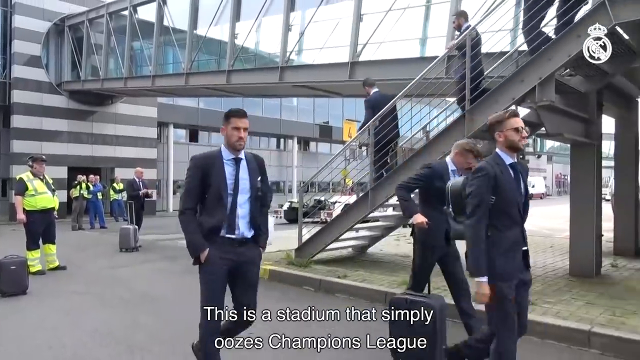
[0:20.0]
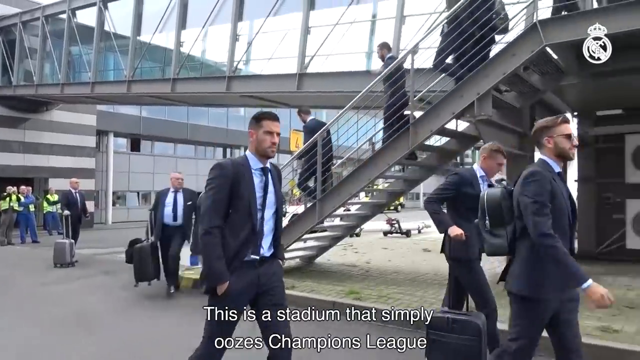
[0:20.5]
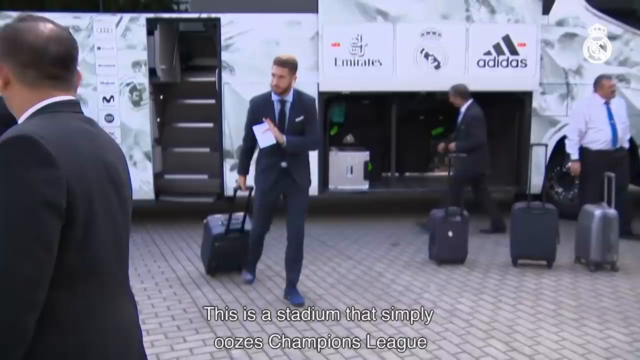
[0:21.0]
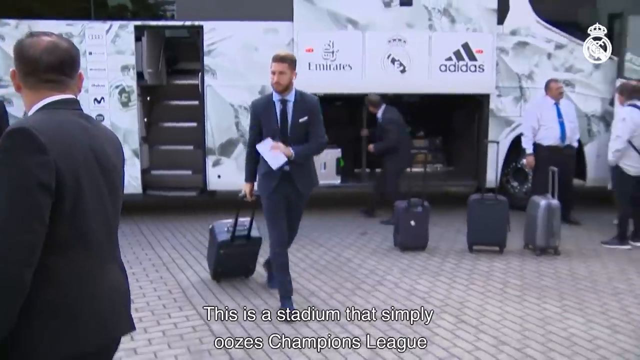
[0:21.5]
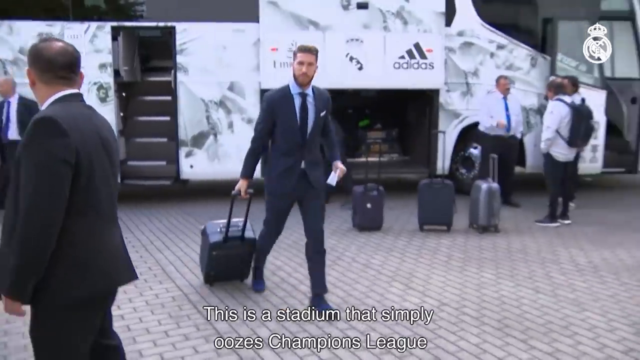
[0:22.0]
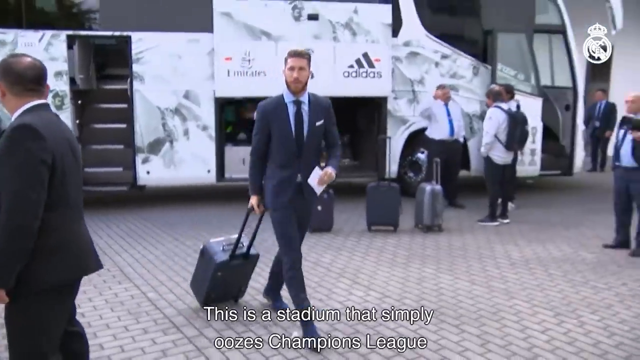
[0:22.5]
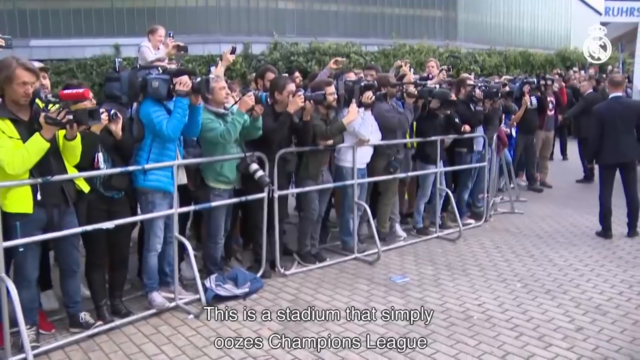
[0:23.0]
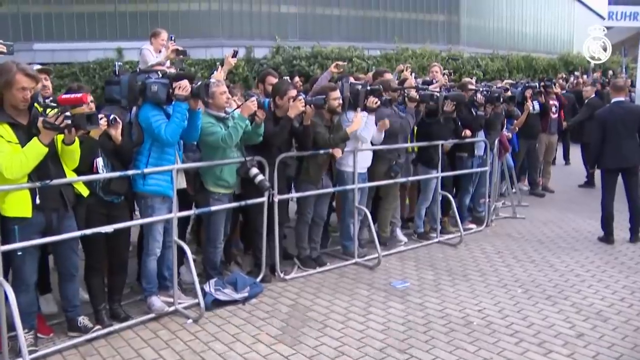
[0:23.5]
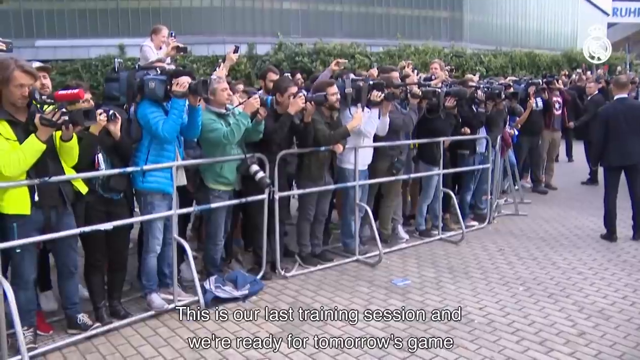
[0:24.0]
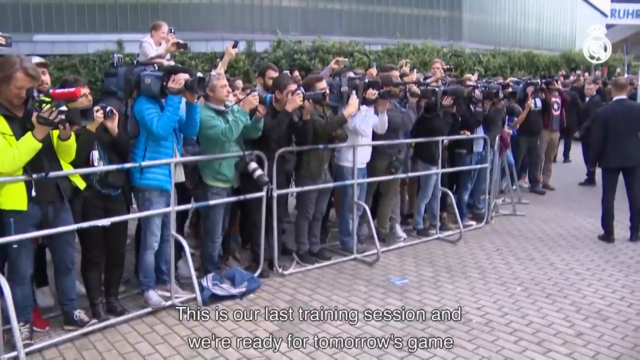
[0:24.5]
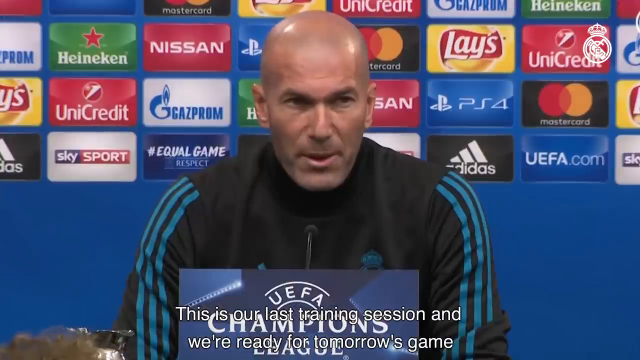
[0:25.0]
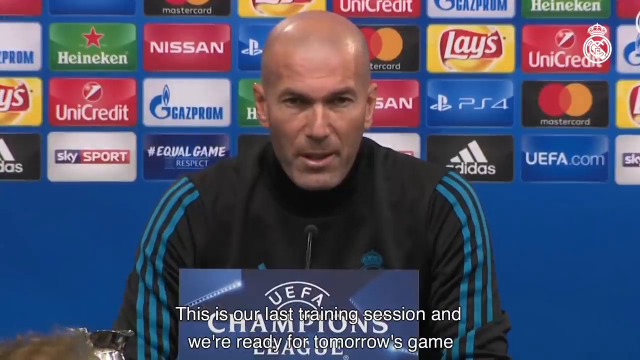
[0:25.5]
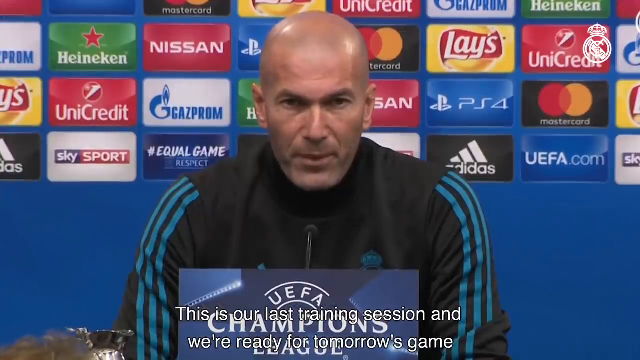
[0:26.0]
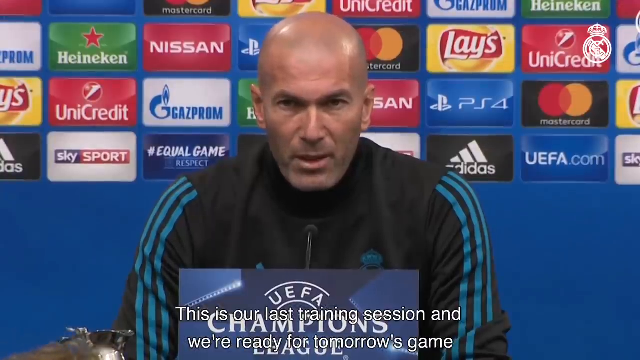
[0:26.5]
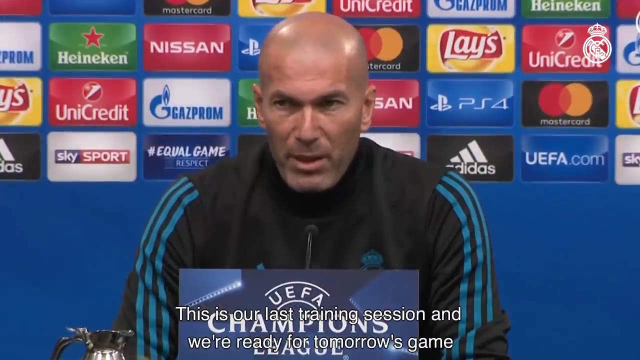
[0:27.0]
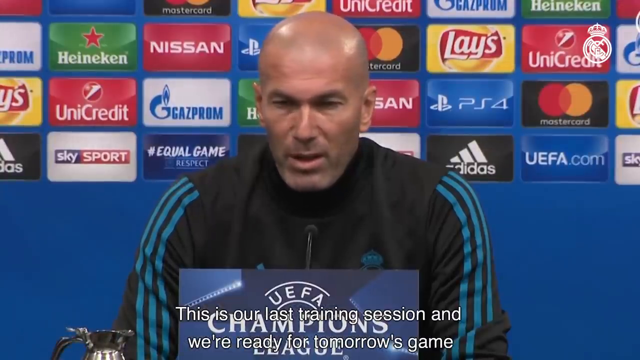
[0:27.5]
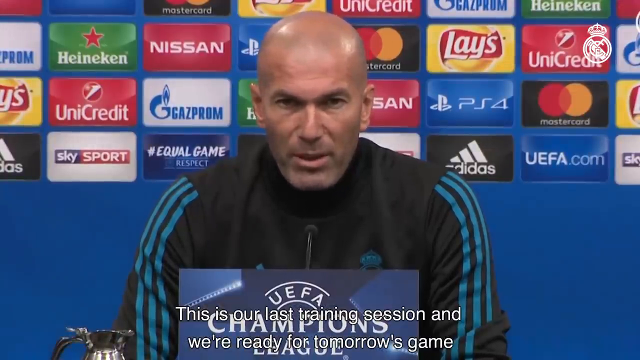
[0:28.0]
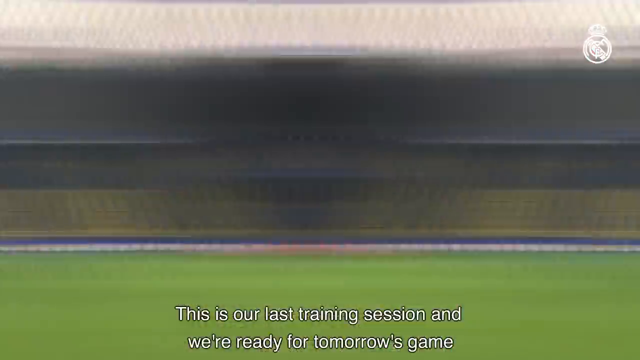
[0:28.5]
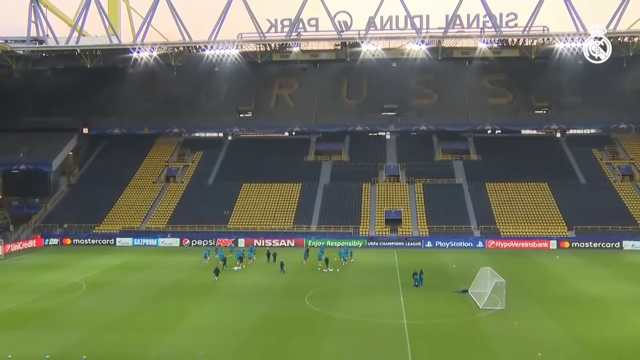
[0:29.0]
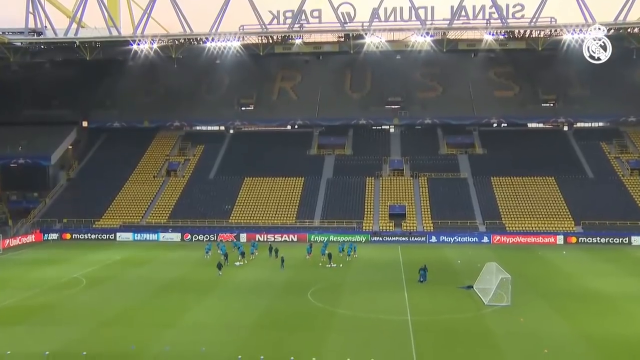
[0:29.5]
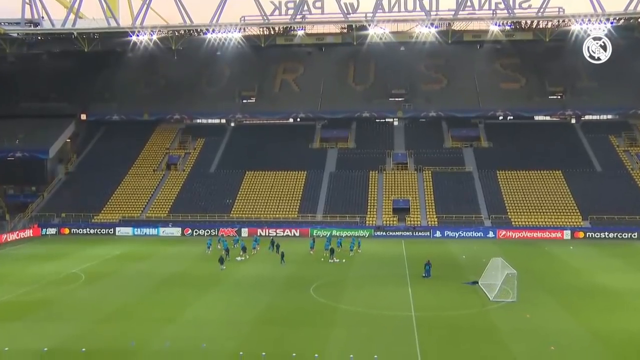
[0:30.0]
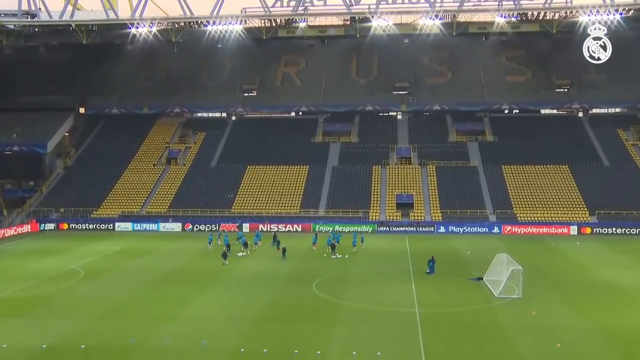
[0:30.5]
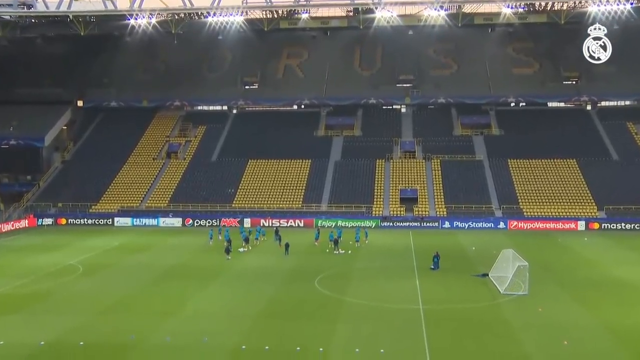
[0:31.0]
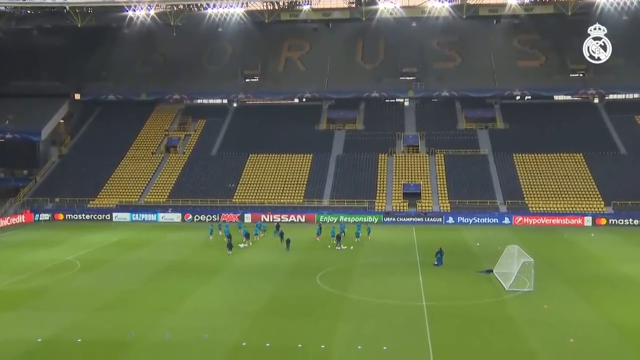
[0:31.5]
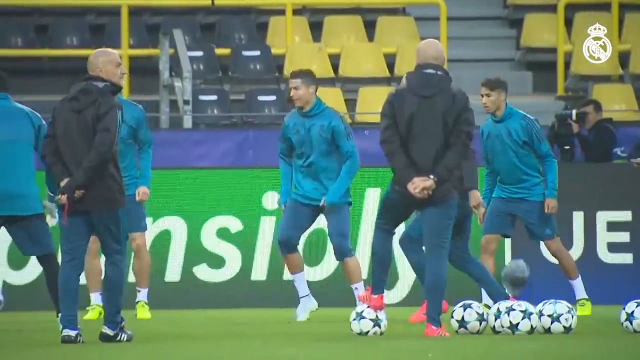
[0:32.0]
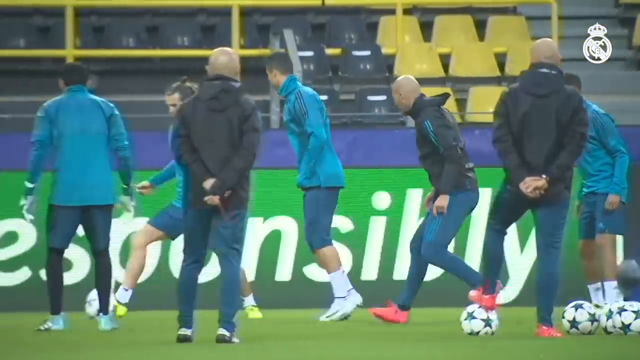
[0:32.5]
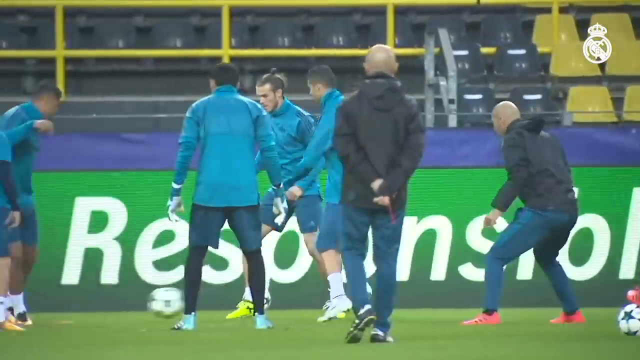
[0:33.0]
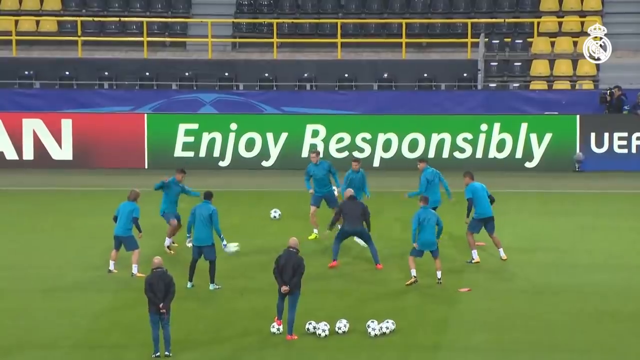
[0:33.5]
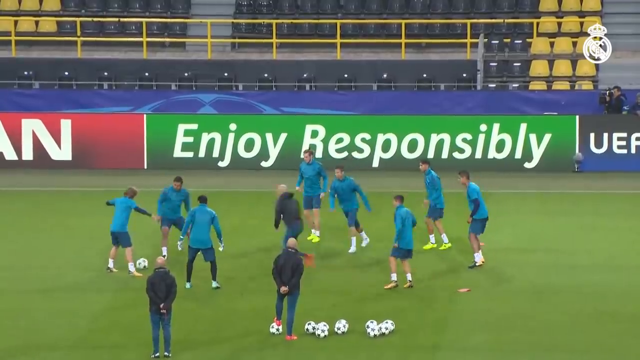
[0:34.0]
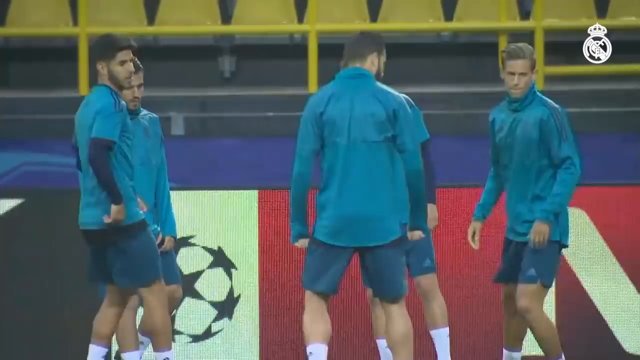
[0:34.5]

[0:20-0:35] Players exit an airplane, walking down the staircase onto the pavement. The scene transitions to a player exiting a bus; he is wearing a suit and has a rolling suitcase. Next, a large number of photographers take pictures of the players. The scene returns to the man giving an interview at the press conference; he is wearing a tracksuit and has a shaved head, and English captions run along the bottom of the video as it plays. The scene then transitions to a football stadium with blue and yellow stands.